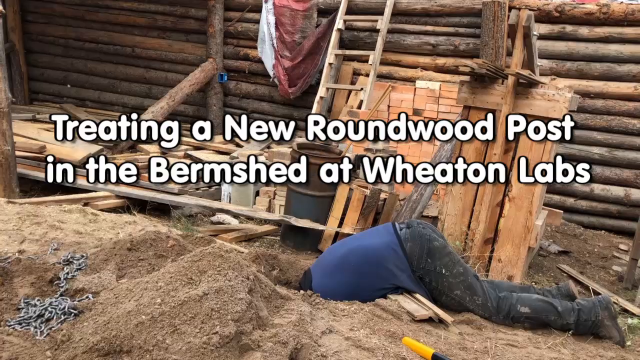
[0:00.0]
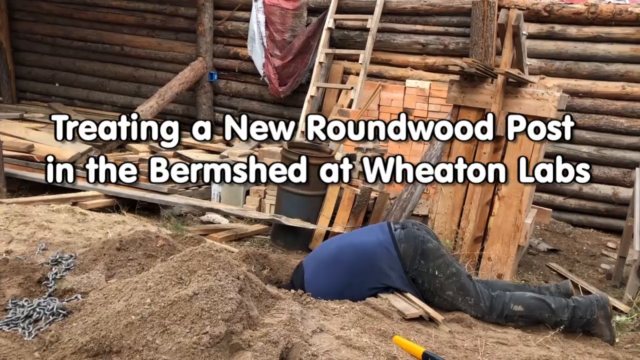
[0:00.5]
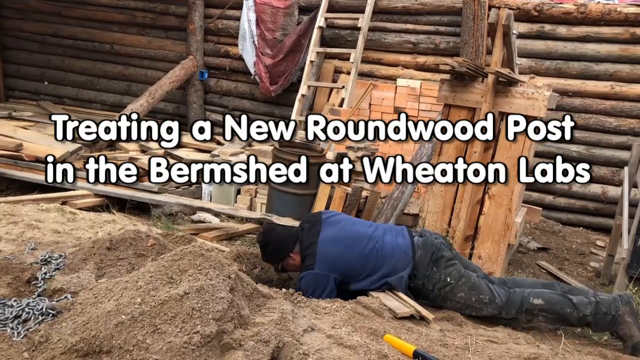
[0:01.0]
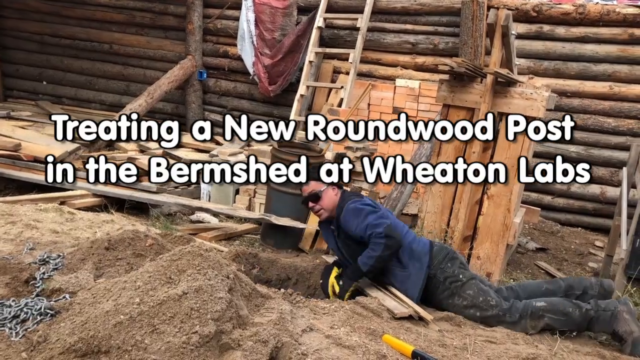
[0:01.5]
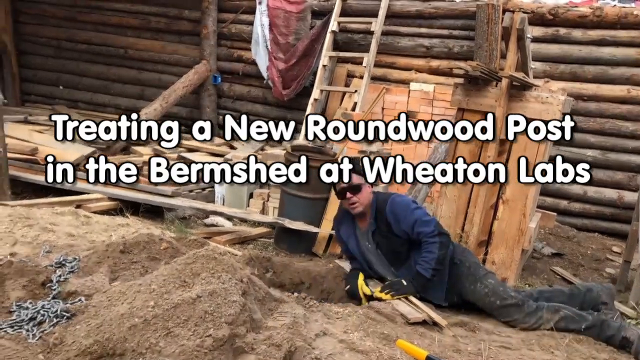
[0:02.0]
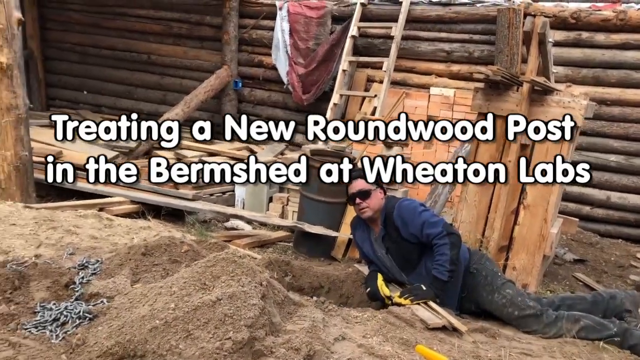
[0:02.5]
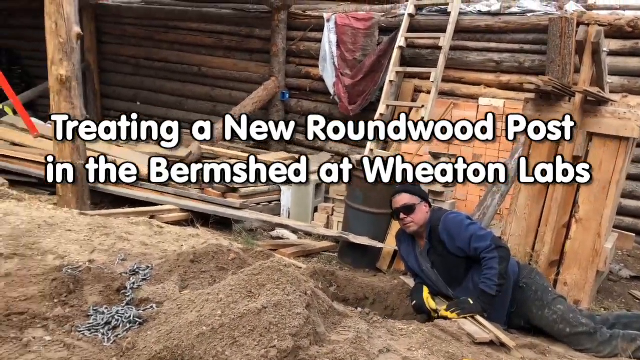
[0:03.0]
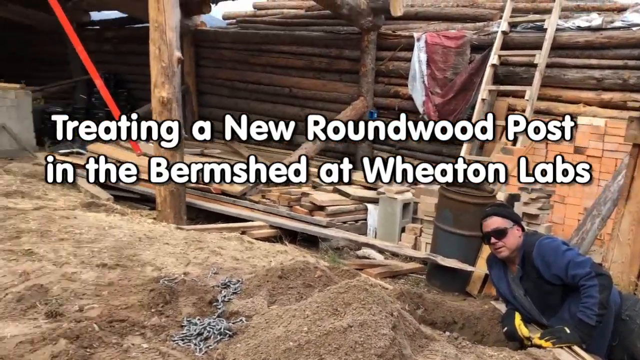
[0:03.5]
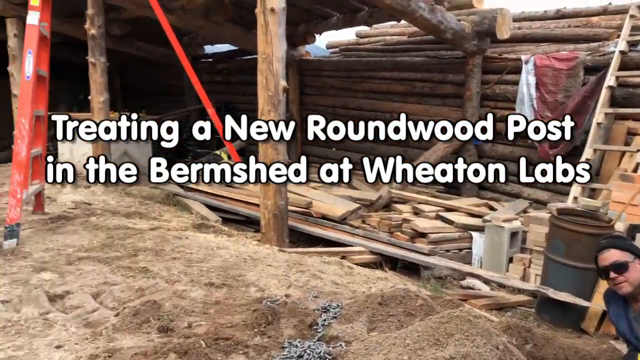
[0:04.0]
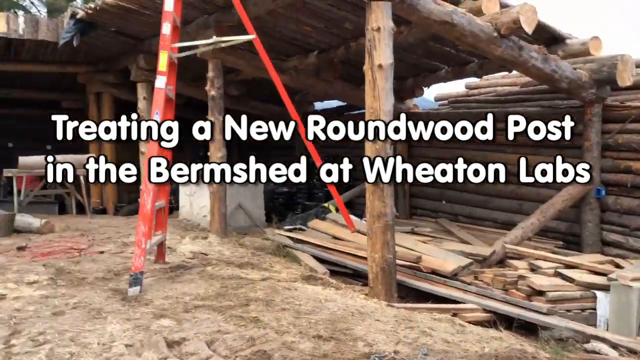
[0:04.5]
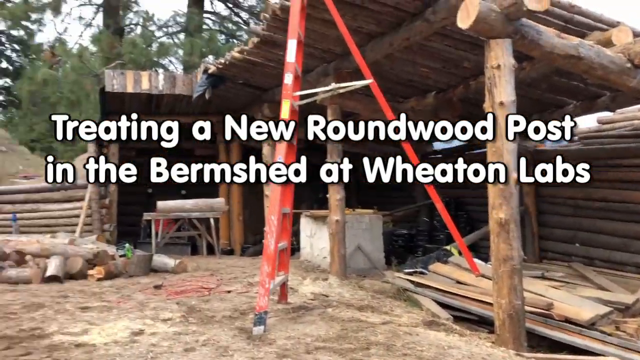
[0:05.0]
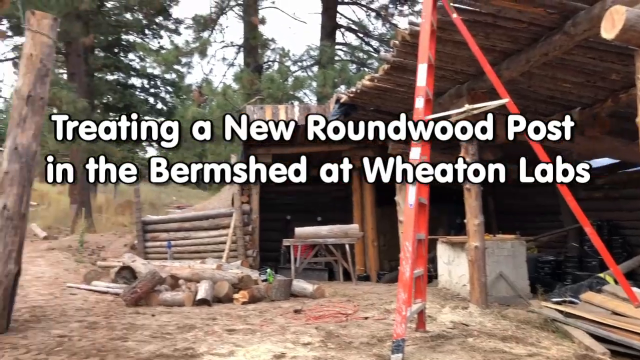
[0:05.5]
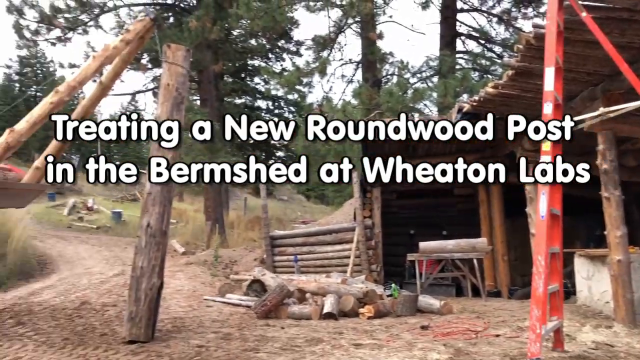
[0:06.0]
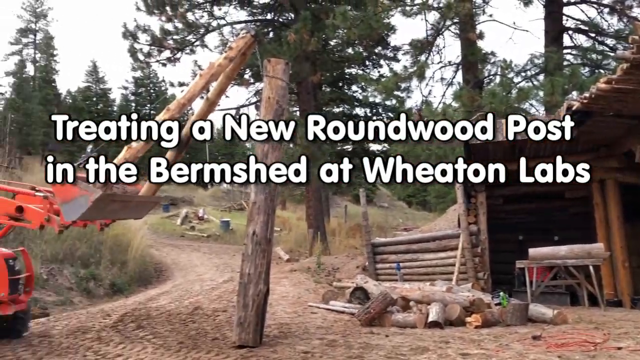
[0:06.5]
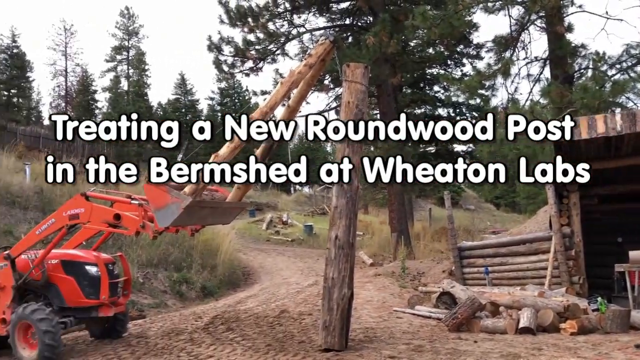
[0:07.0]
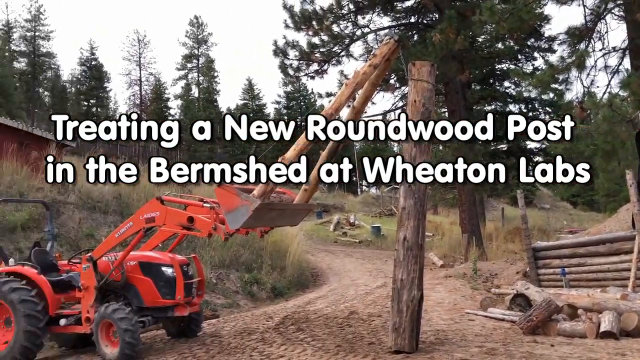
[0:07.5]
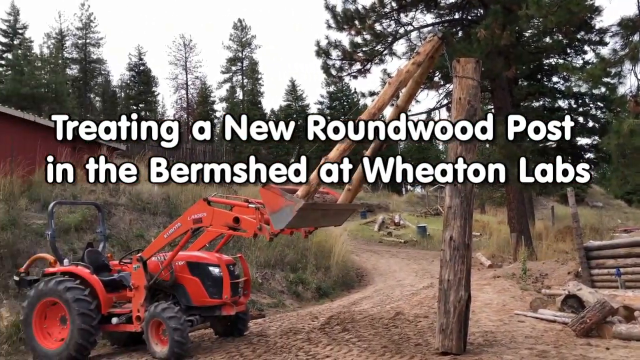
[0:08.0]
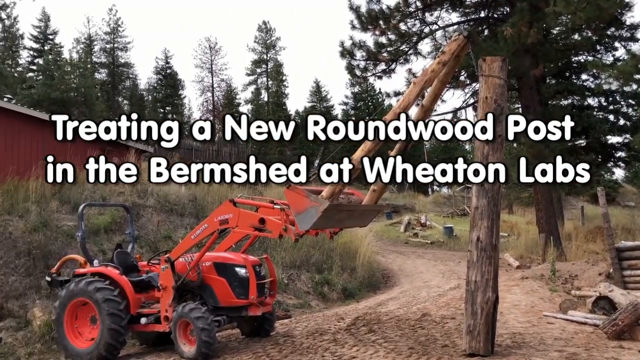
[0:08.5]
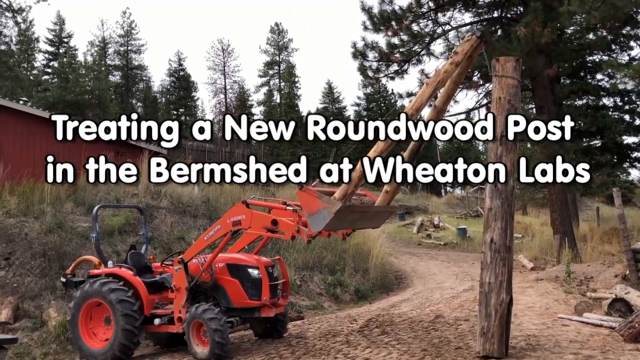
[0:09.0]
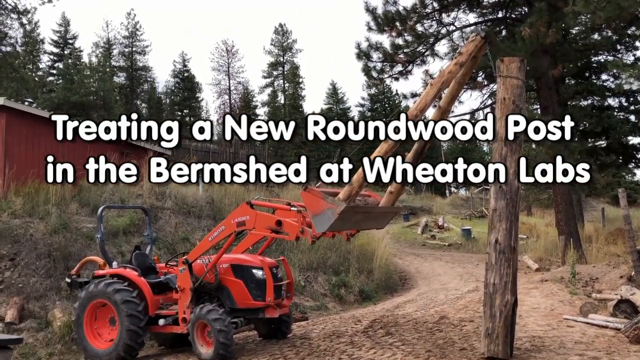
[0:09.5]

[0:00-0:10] A title screen reads "Treating a New Roundwood Post in the Bermshed at Wheaton Labs." Behind it, a man leans into a hole in the dirt. He then looks up and begins speaking to the camera. Behind him is a structure made of wooden logs, and the camera pans around to show that it has a roof similarly constructed with logs, with wooden posts holding it up. On the left of the screen, a front loader is loading additional posts.